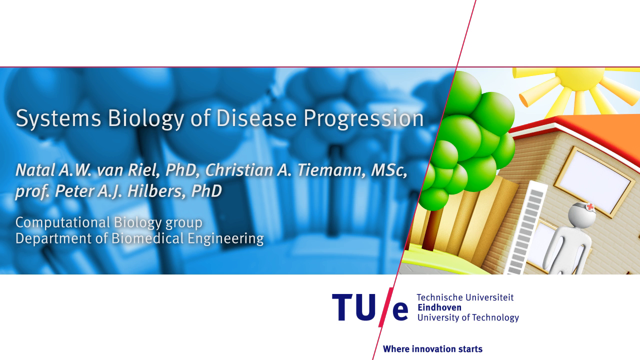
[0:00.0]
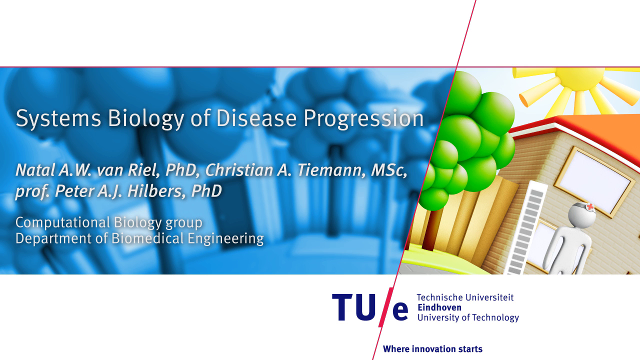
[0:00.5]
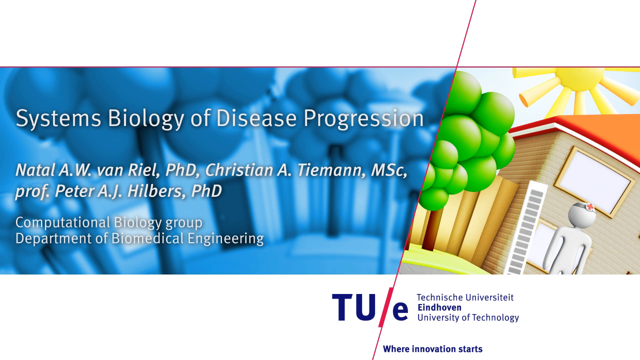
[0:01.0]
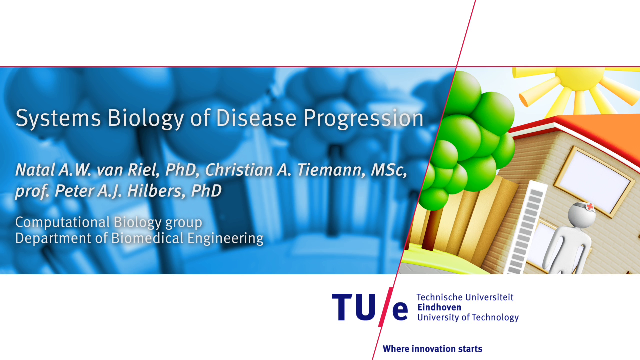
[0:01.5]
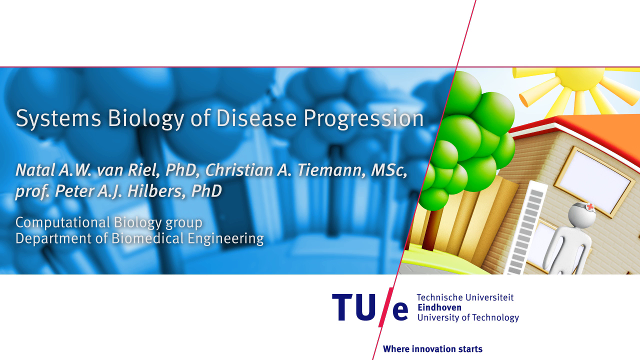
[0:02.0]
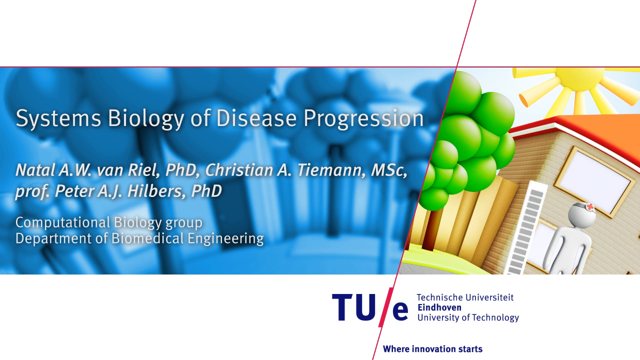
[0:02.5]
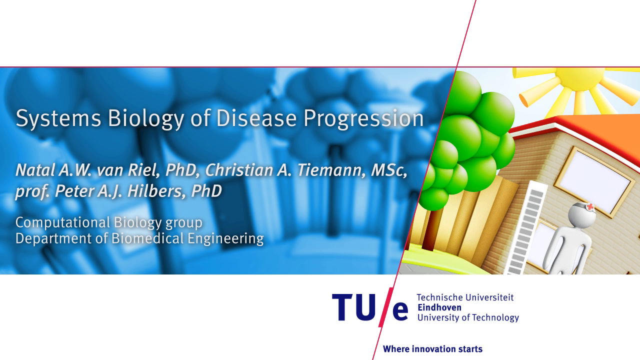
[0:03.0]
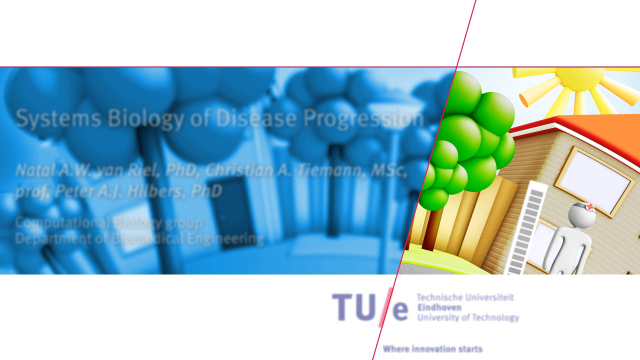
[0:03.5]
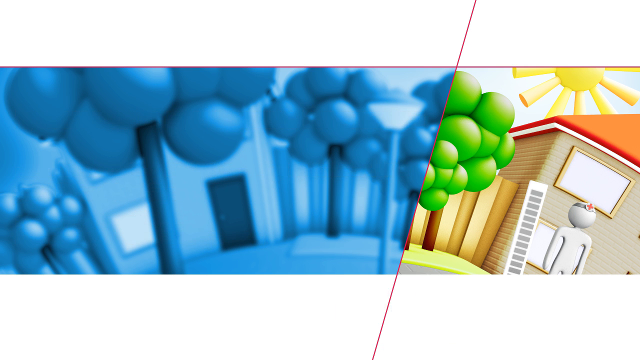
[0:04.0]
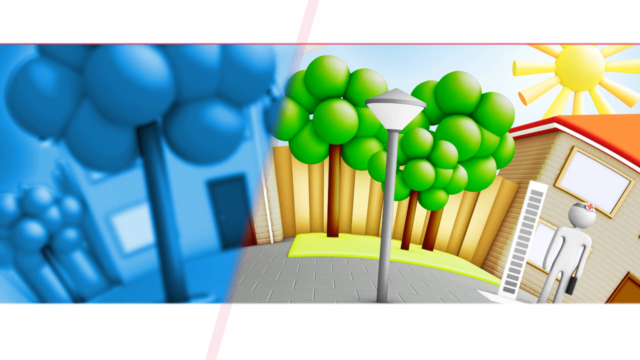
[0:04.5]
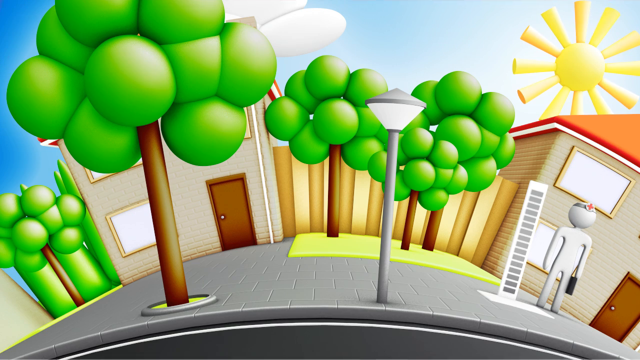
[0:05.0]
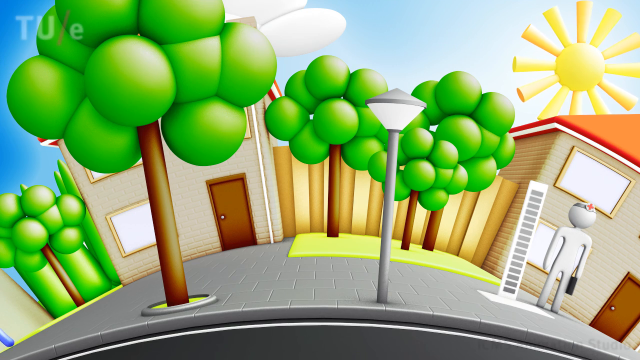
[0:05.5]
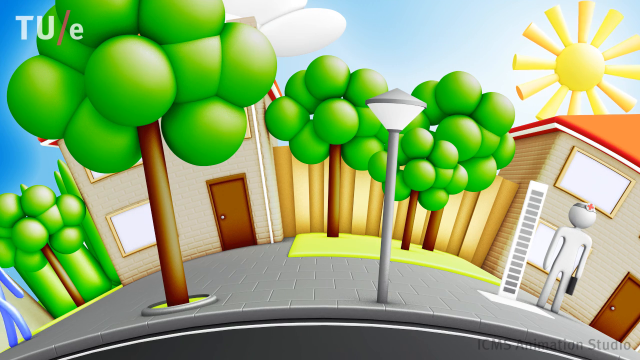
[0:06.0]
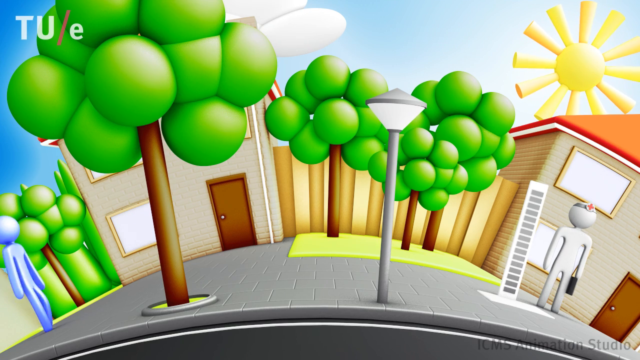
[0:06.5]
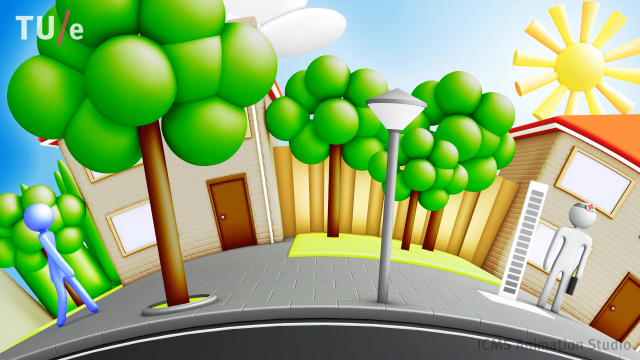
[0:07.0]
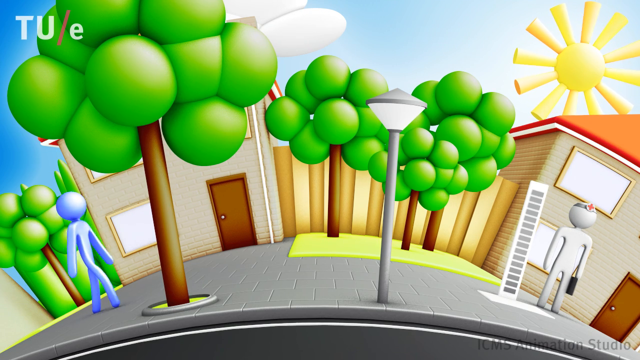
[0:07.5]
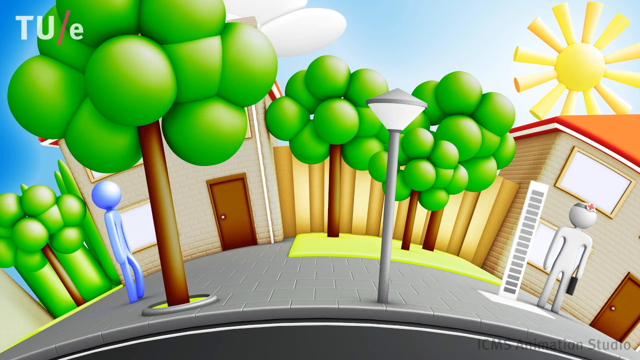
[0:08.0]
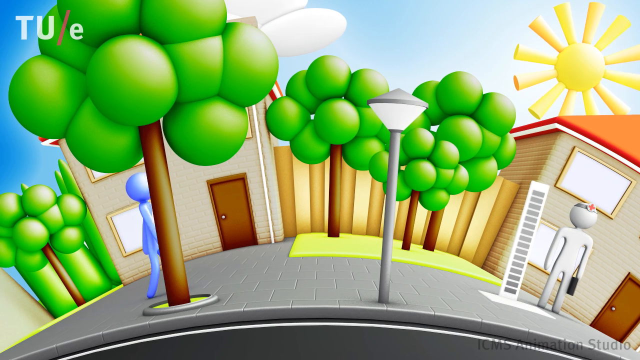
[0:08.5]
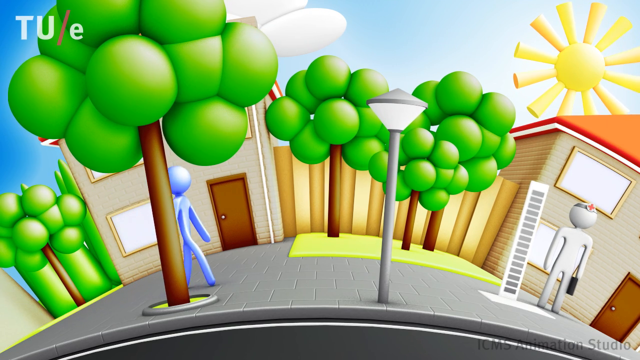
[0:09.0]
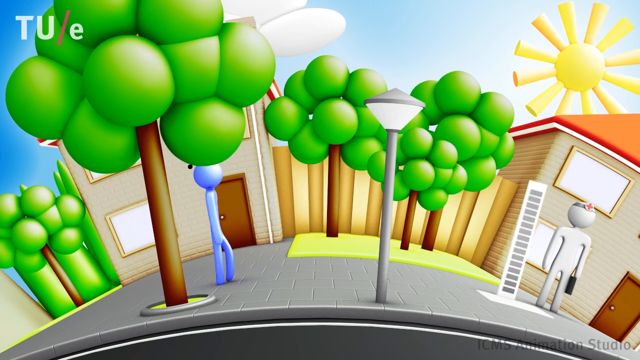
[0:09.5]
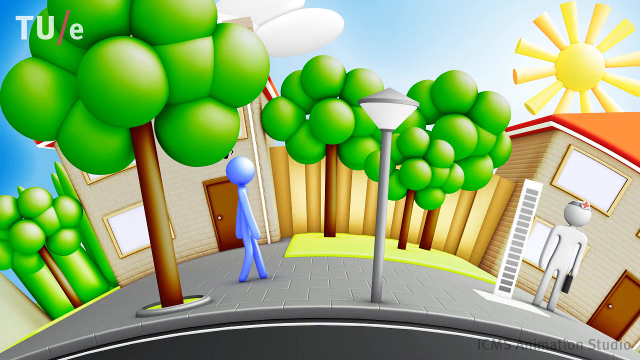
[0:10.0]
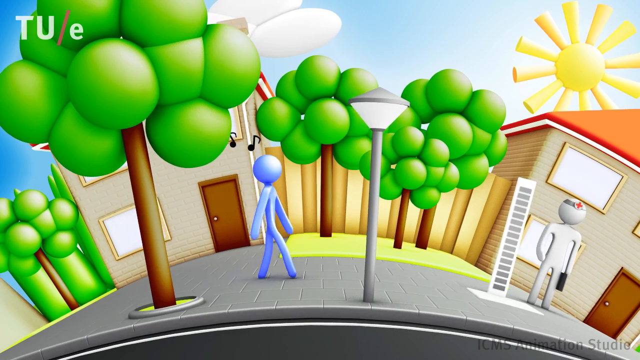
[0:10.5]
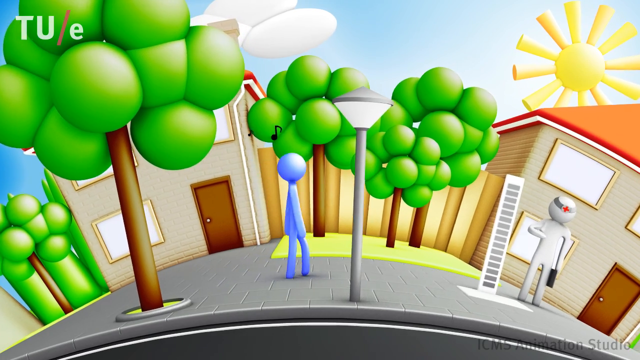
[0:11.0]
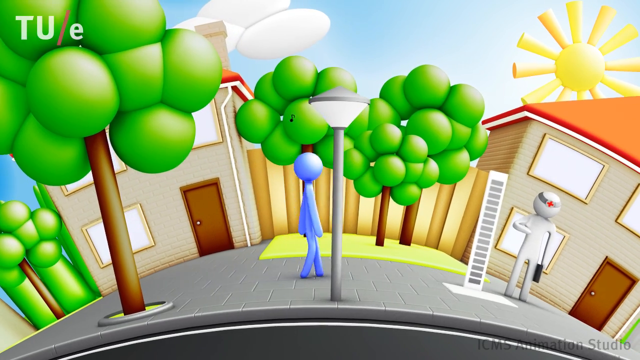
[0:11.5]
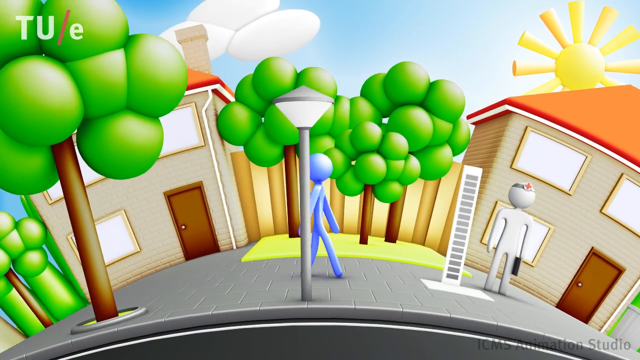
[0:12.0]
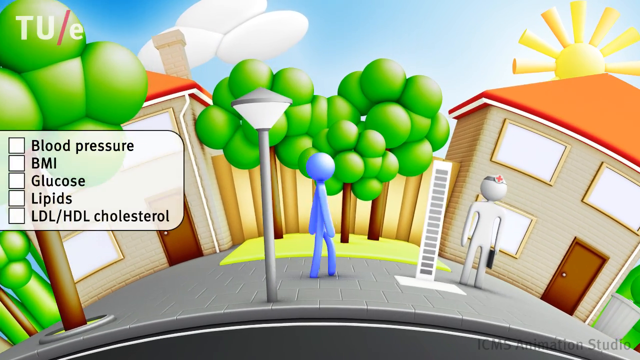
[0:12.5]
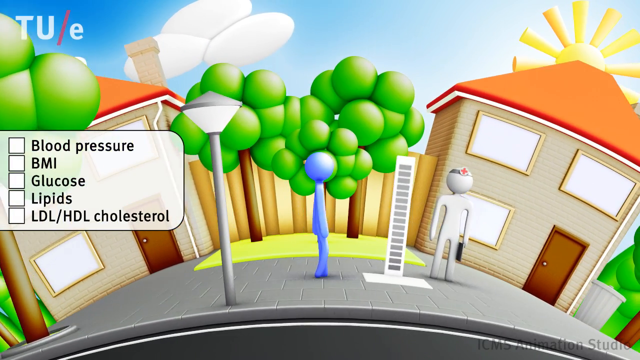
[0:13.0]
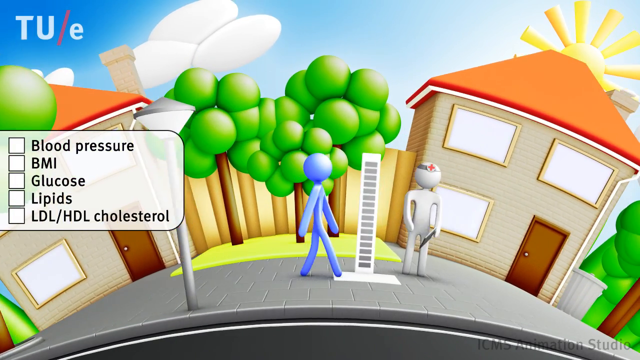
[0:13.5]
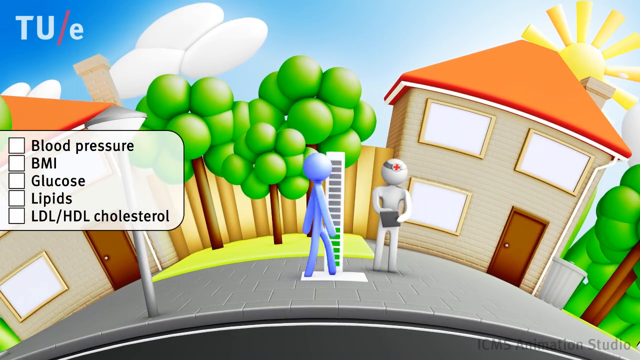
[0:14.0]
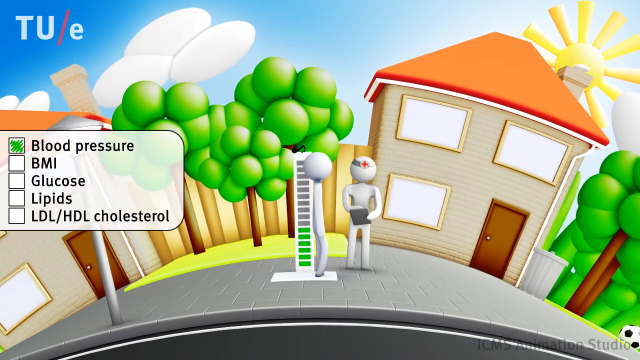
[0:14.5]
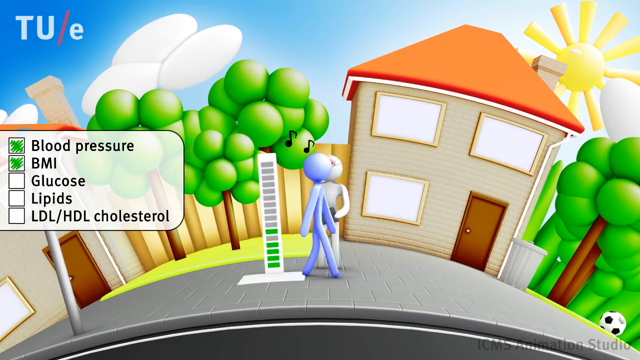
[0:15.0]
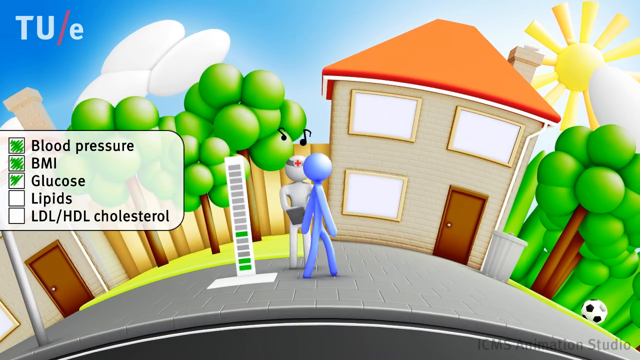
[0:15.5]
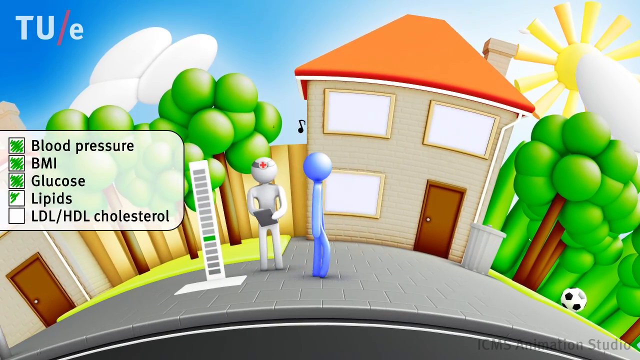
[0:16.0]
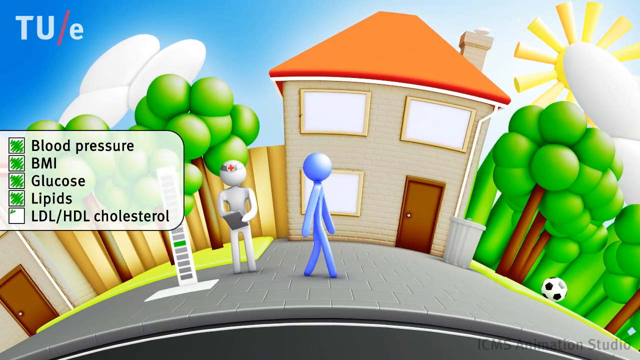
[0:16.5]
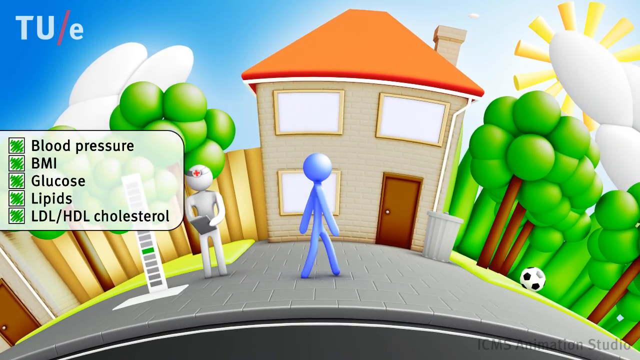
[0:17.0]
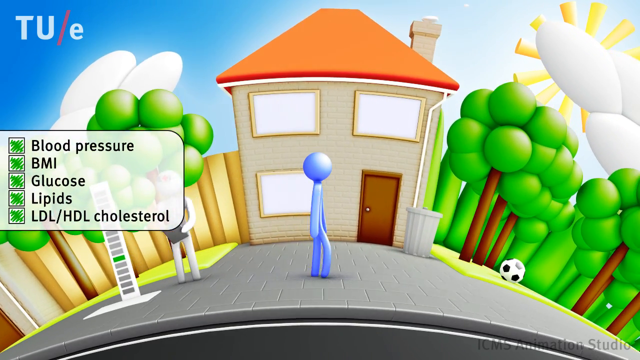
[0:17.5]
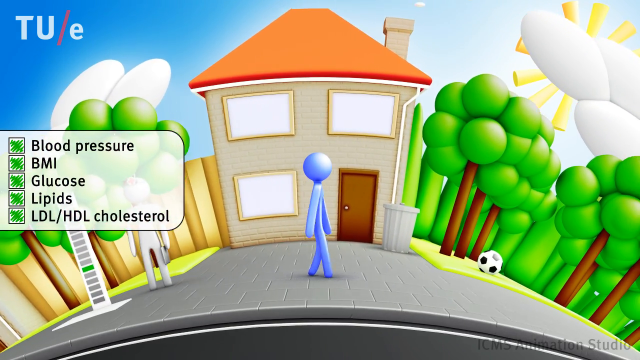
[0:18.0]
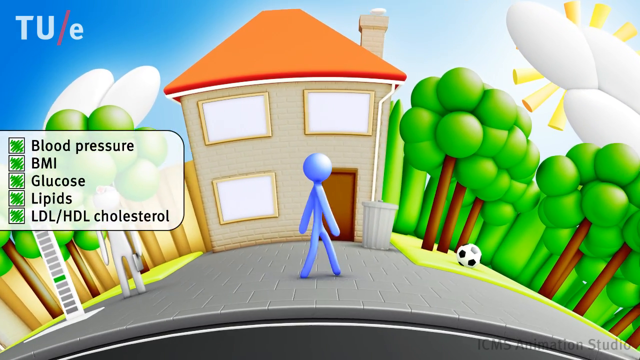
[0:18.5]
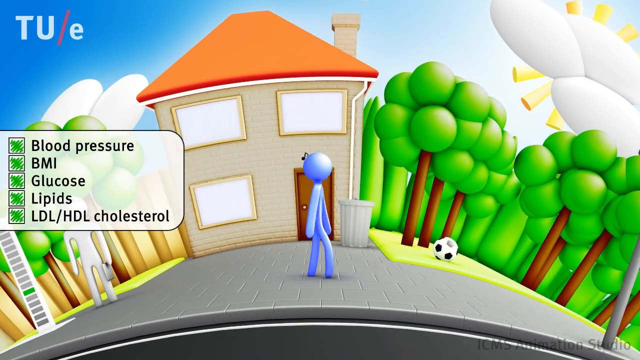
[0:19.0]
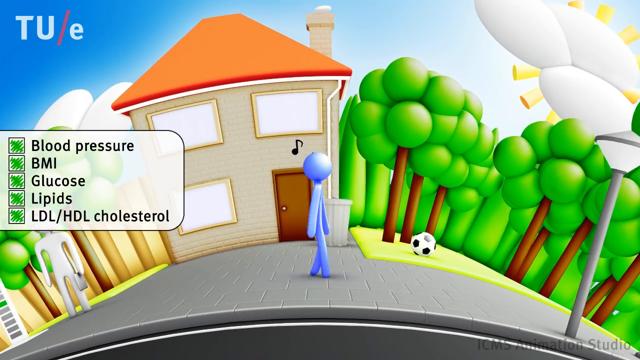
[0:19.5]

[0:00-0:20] An opening screen shows colorful graphics. On the right is a house with a red roof and a white humanoid shape. On the left, a blue effect partially covers the view of the house, and white text is written across the screen. On the left it reads "System Biology of Disease Progression", followed by the names of the researchers, and below that "Computational Biology Group, Department of Biomedical Engineering". The blue effect then clears away to the left, revealing an animated scene of trees in front of two houses. The sun is in the blue sky in the upper right, and the tree leaves look brown. A white humanoid figure with no facial features looks like the outline of a human. Another humanoid figure, pastel violet in color, approaches from the left side of the screen, walks behind the trees and behind the lamppost, approaches the first figure and walks past it, apparently singing. On the left side, blood parameters of the person's metabolic state are listed: blood pressure, BMI, glucose, lipids, and LDL, HDL cholesterol each check green. The violet humanoid keeps walking and singing, with black musical notes surrounding its head.